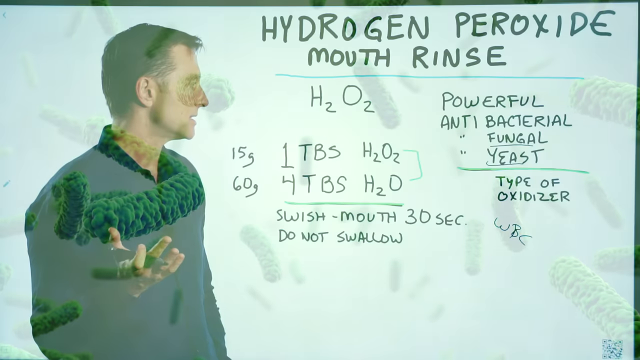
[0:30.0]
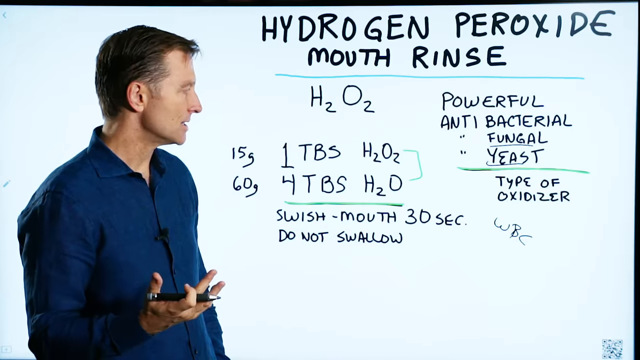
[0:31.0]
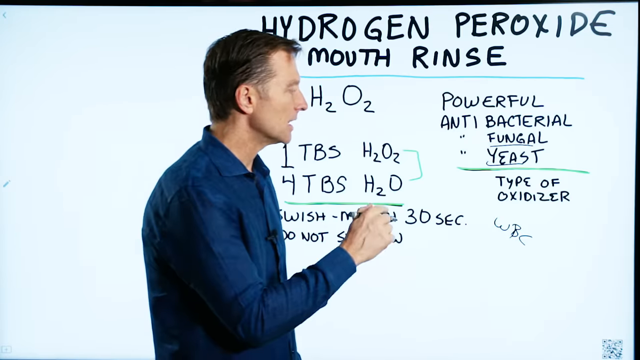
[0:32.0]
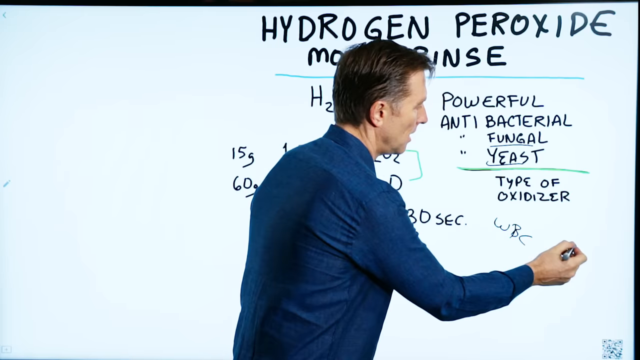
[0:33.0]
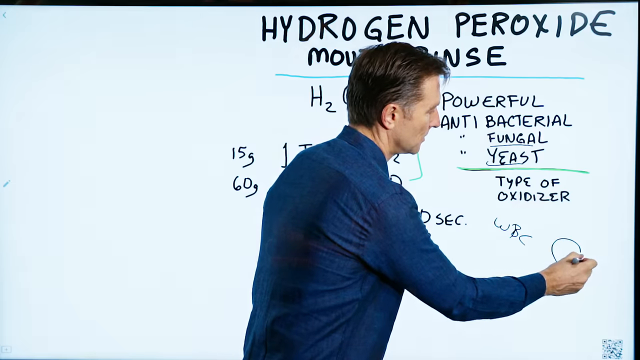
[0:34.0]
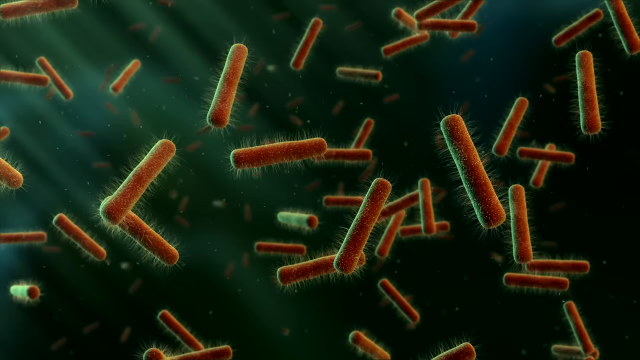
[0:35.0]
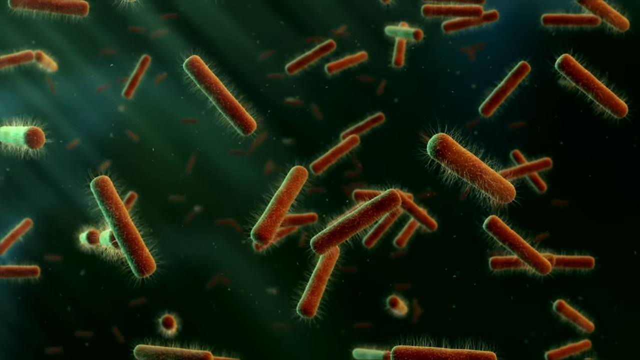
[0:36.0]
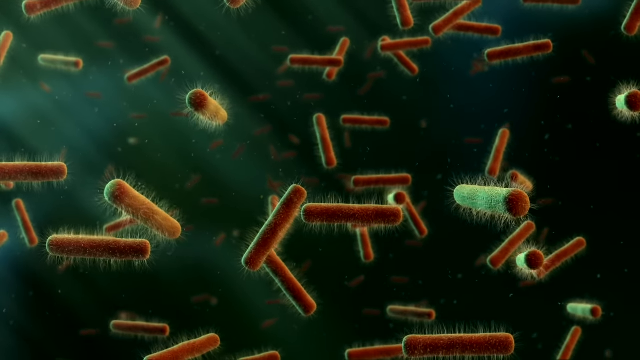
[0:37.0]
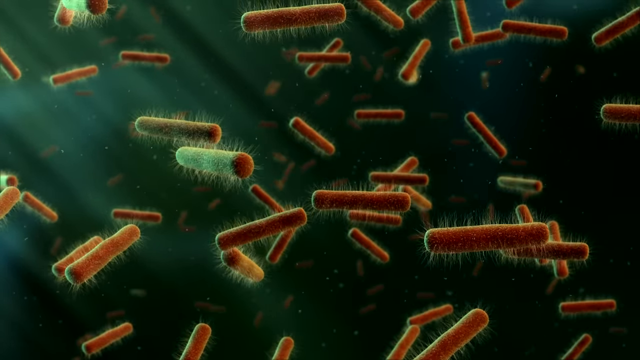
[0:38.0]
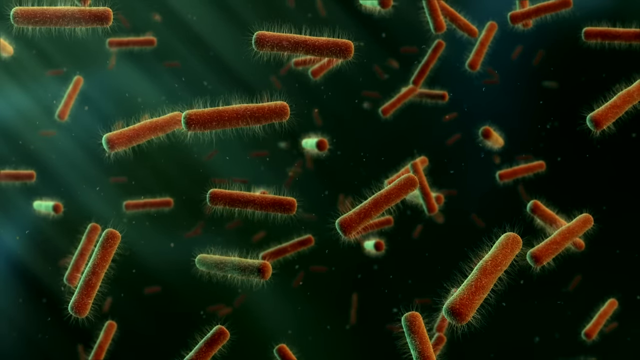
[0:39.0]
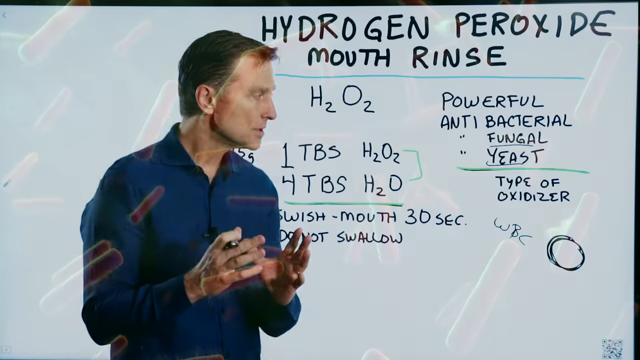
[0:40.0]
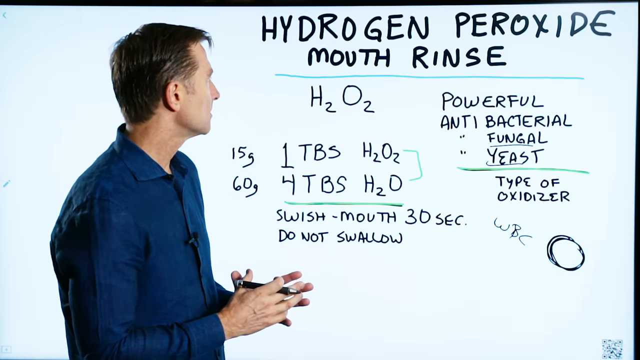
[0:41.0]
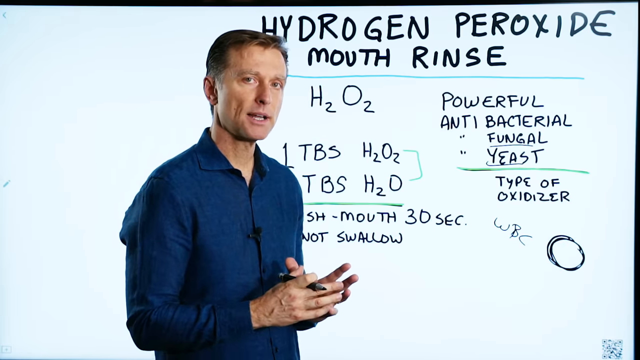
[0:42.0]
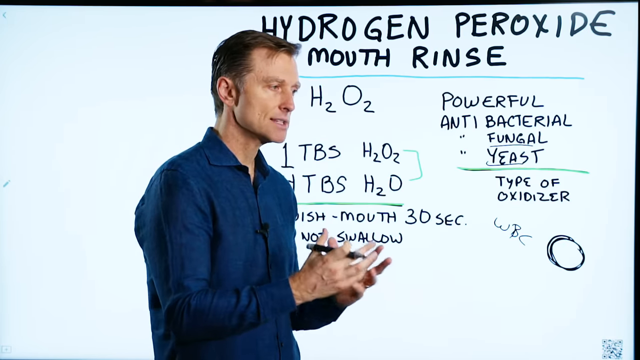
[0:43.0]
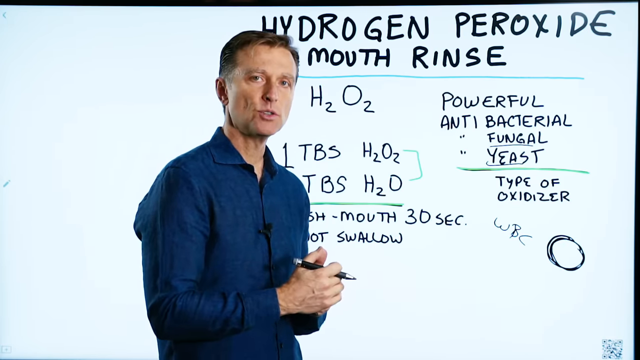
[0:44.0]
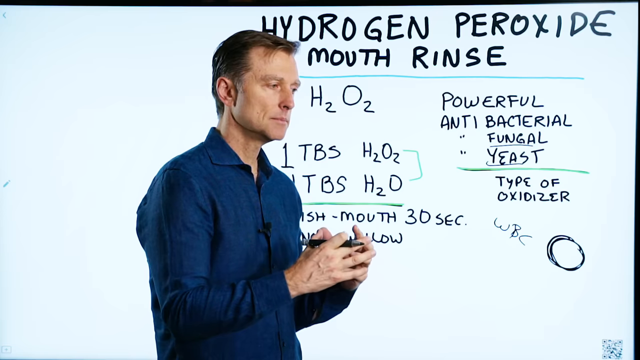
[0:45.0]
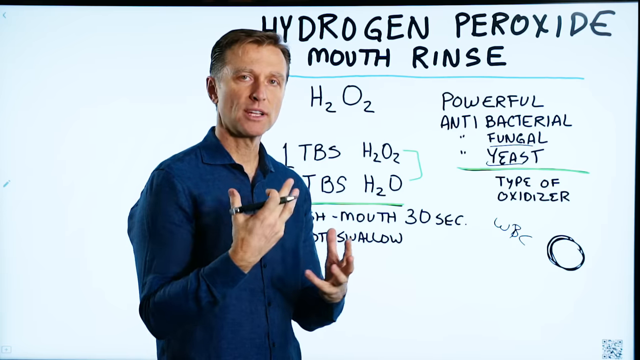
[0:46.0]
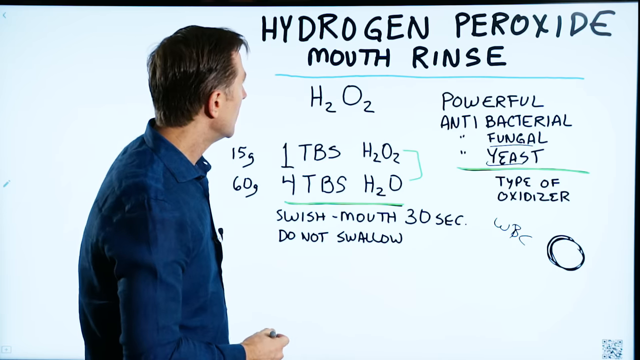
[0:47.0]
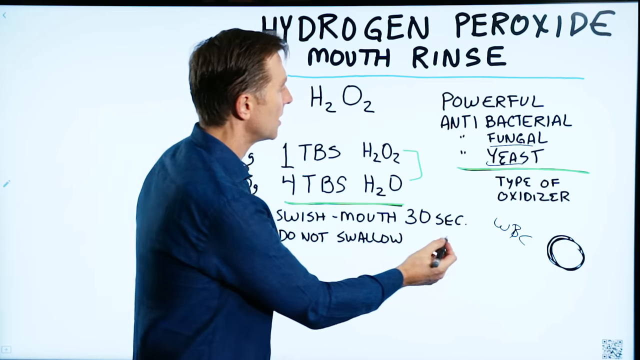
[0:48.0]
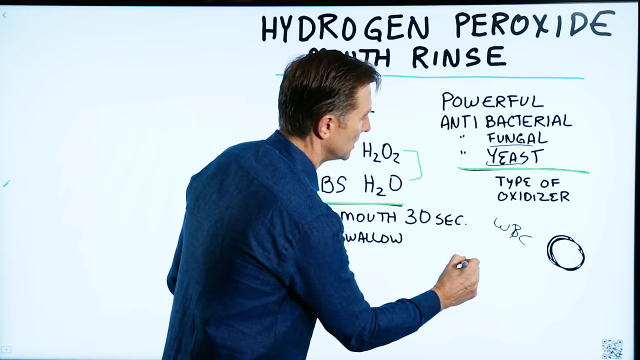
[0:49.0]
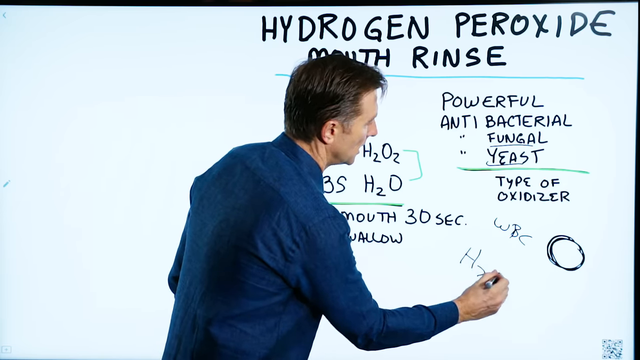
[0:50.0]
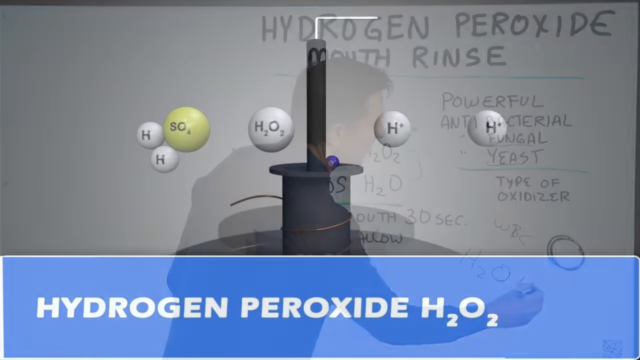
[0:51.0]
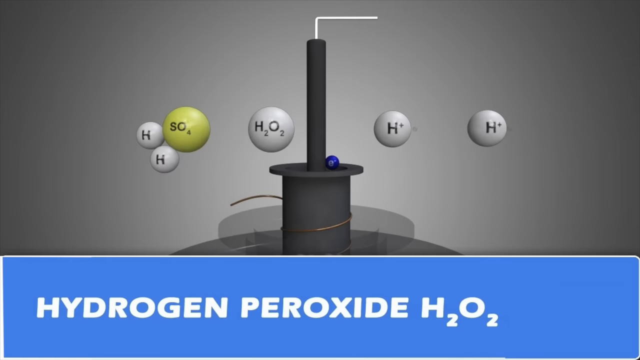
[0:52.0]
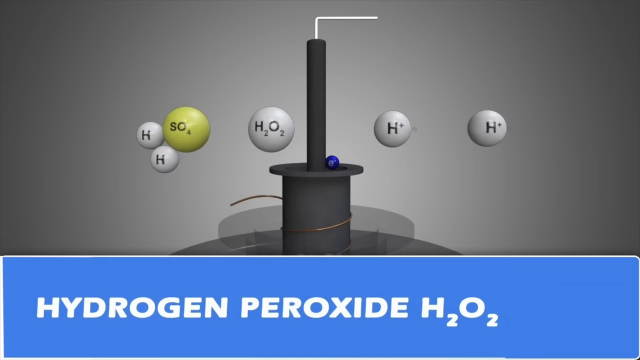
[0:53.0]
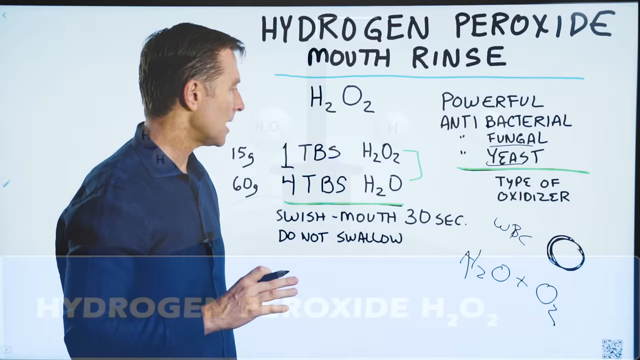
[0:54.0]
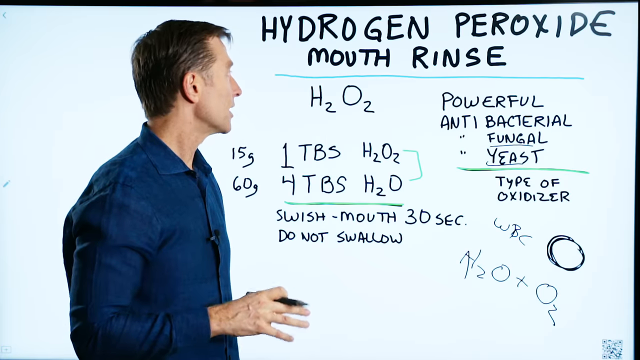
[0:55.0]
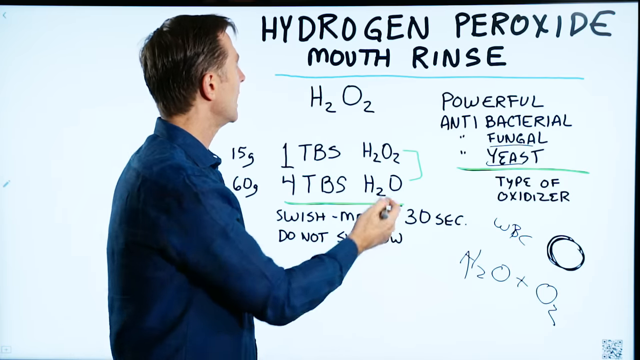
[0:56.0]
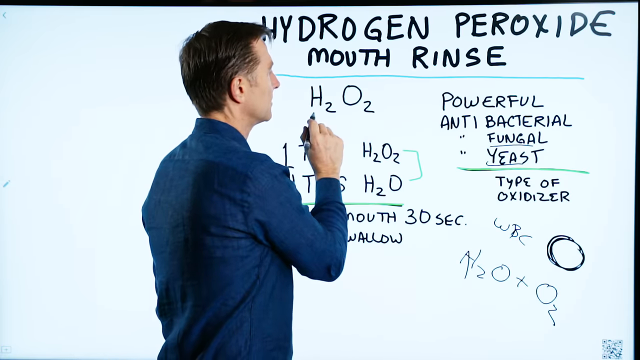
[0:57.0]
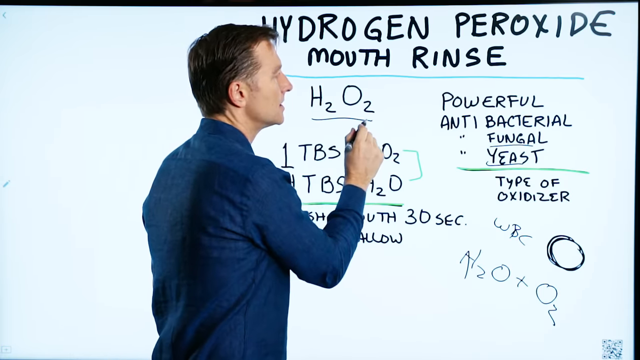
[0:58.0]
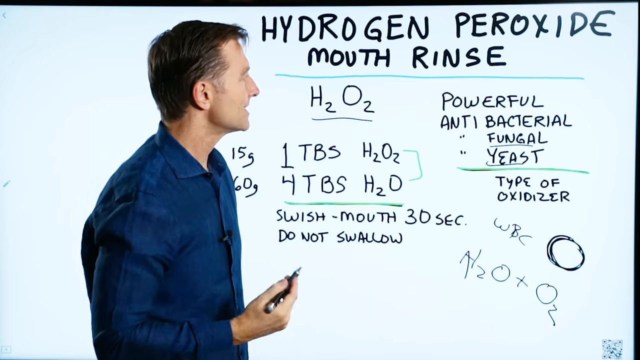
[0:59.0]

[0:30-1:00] The man writes, moves his hand, and draws a circle, while other things that look like molecules or bacteria move in a reddish color. He uses his hand to demonstrate as he continues explaining. He writes H2O, and something reads "hydrogen peroxide" on a blue background. A picture appears, and he underlines H2O2, gesturing as he talks. The picture shows five balls labeled HH, one ball with H2O2, a lime-yellowish ball with SO4, and a small mini ball next to it.